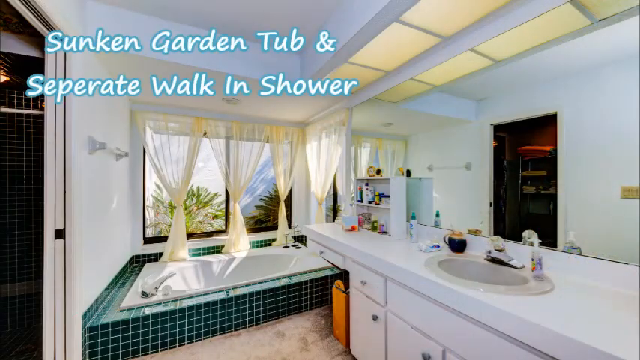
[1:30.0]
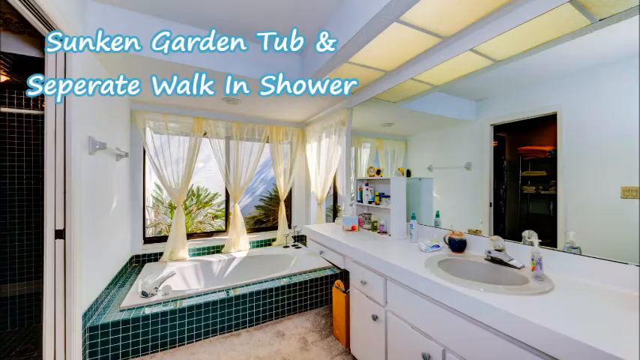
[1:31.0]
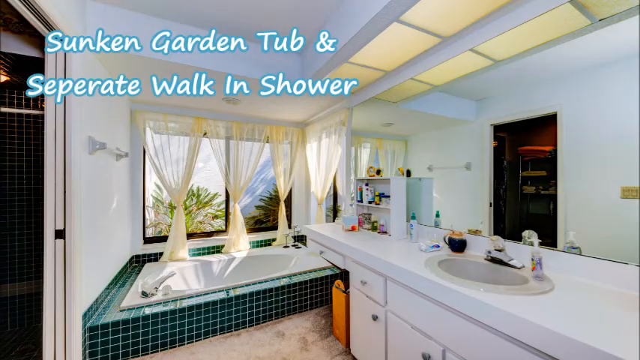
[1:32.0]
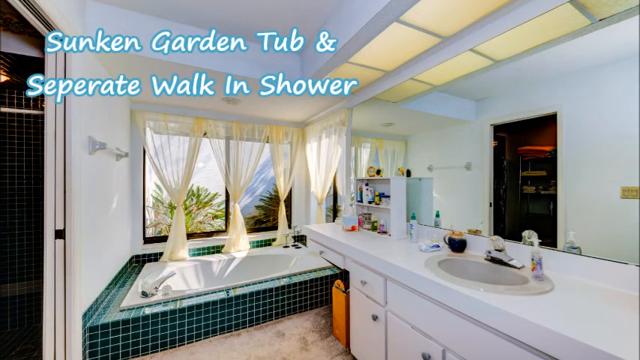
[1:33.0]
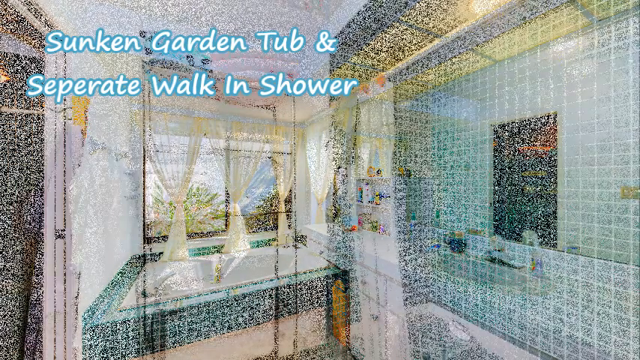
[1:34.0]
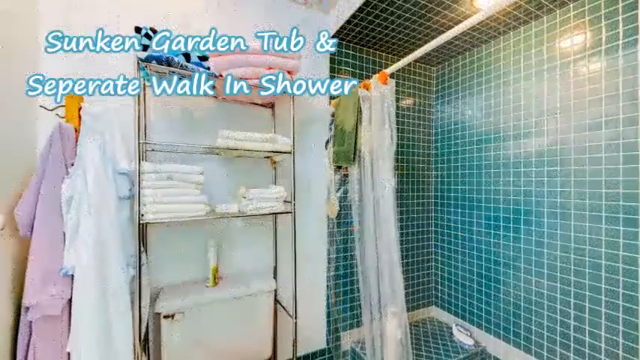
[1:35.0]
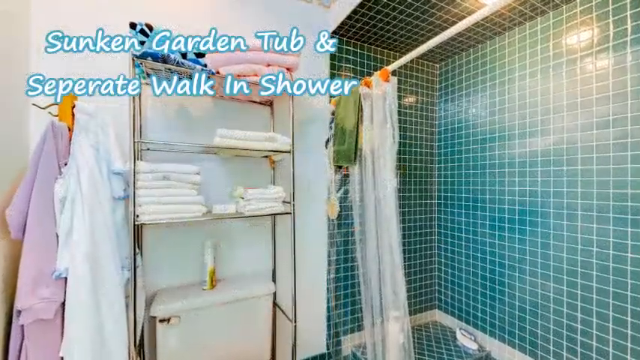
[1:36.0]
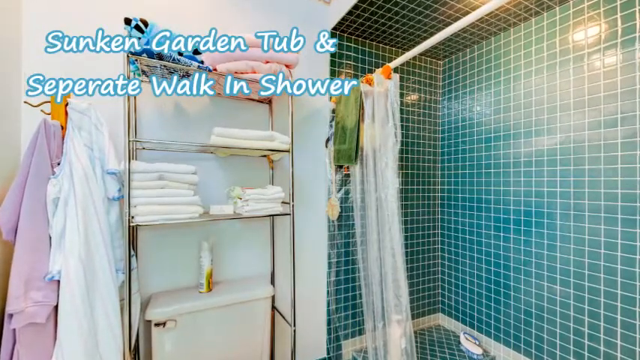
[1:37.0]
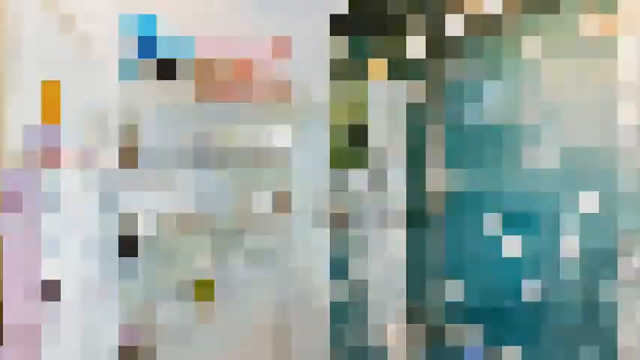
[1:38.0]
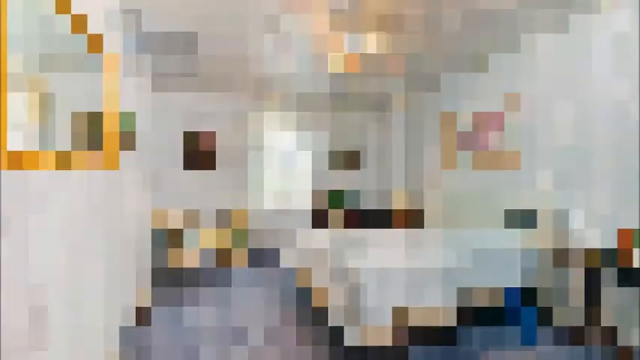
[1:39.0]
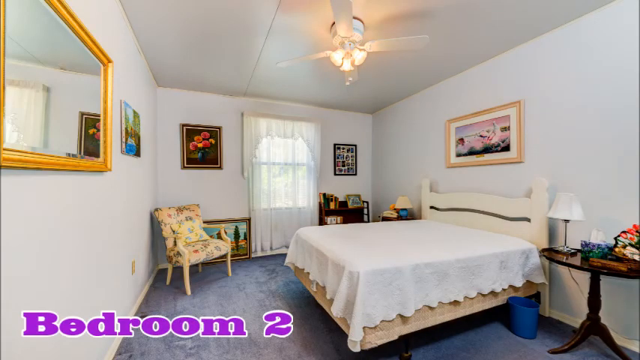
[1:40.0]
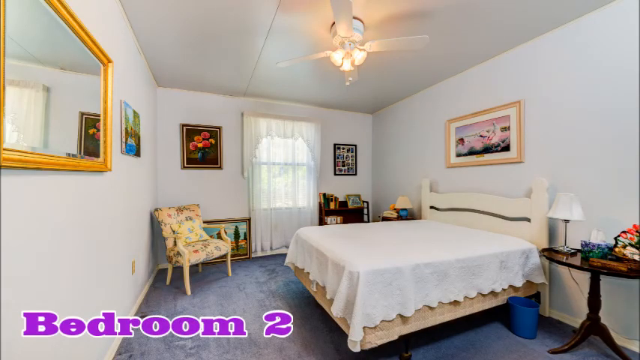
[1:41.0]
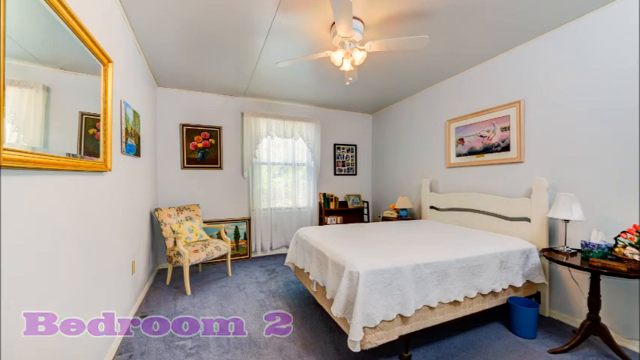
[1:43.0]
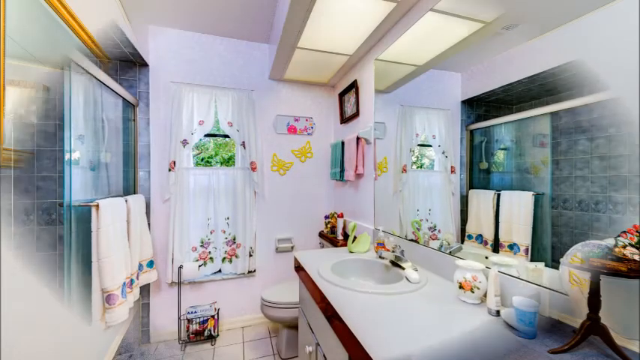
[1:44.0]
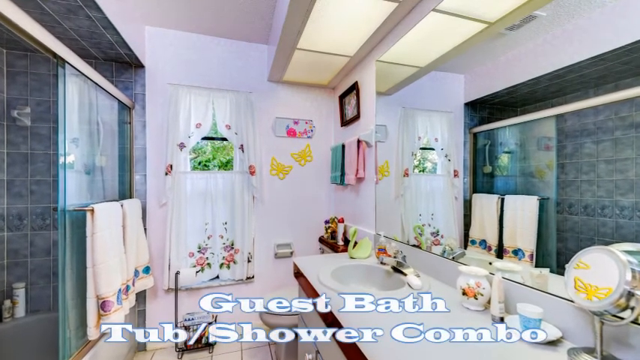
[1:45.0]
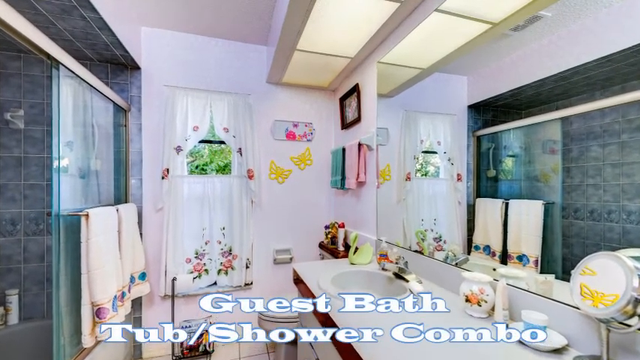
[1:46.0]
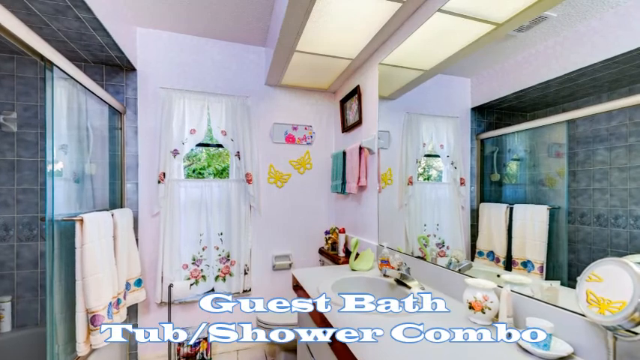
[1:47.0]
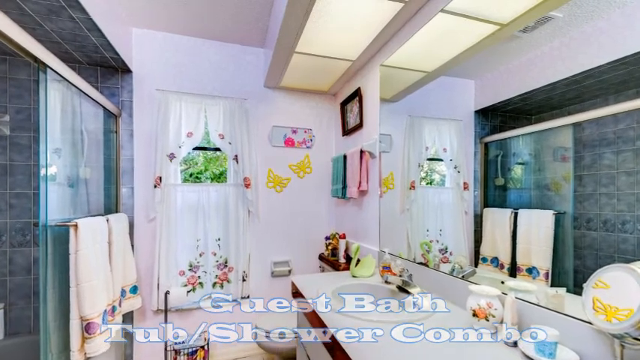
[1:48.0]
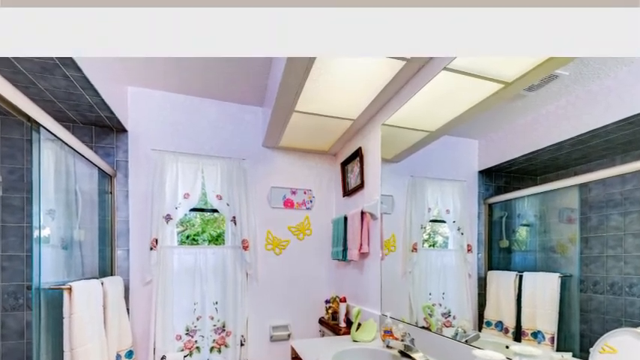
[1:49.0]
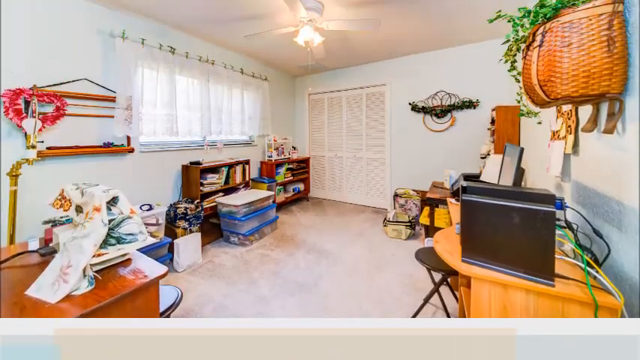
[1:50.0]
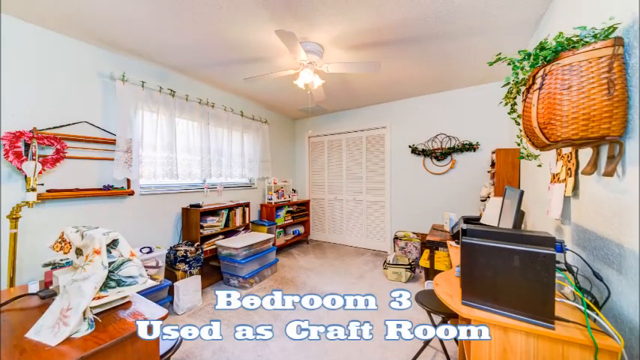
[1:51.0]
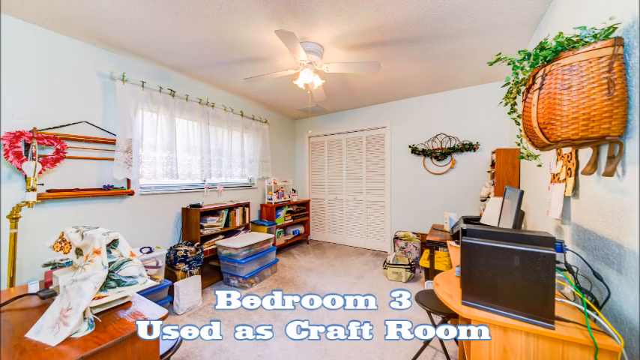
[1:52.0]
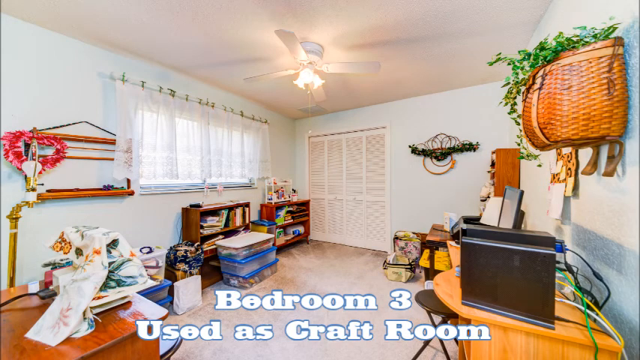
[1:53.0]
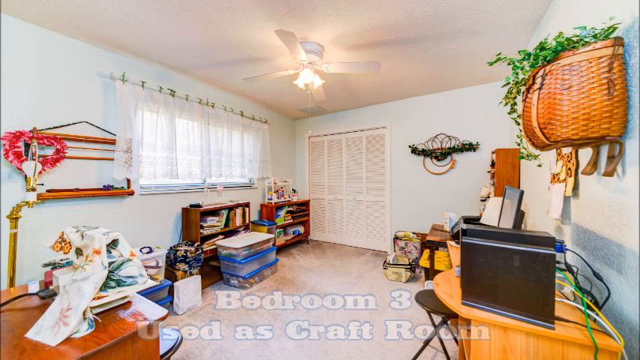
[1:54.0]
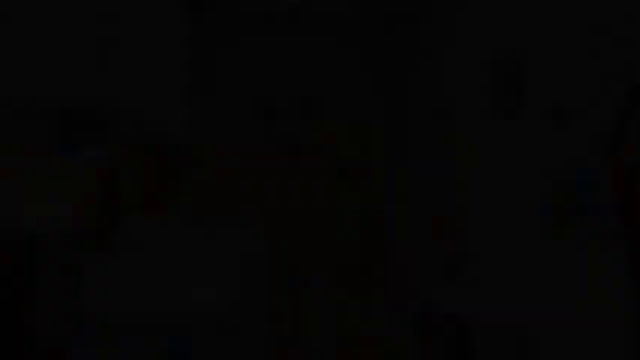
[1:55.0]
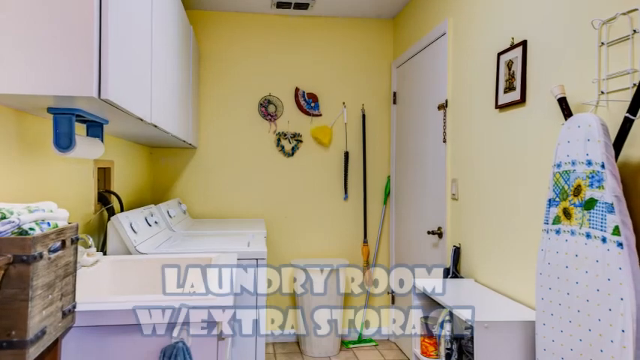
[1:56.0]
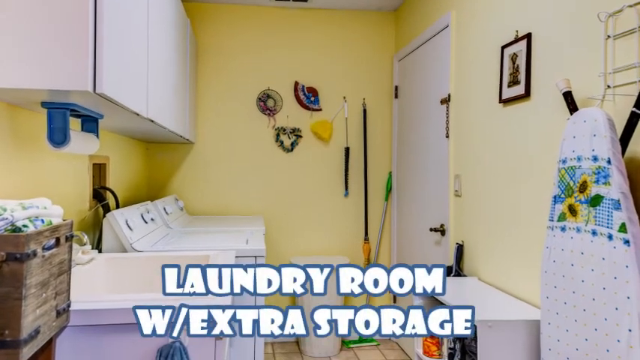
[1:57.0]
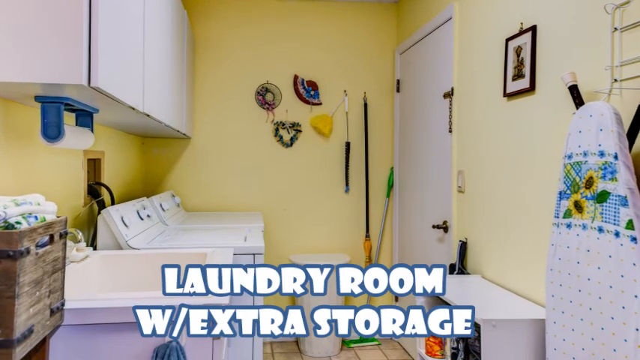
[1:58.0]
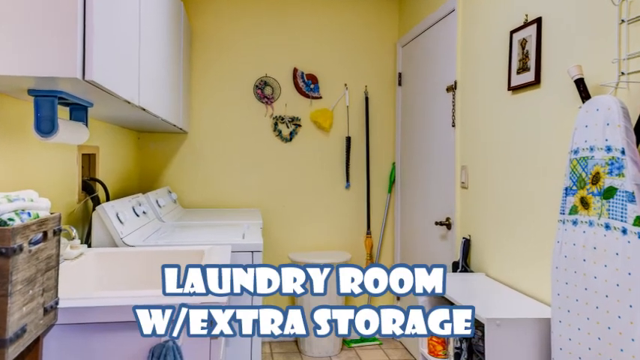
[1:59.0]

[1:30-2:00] The master bathroom shows the sunken garden tub, with text noting a separate walk-in shower. The video then looks at the shower area, which is also tiled in green. Some shelves on a stand are over the toilet, and some towels hang on the walls. The camera moves to bedroom two, which has white walls, a ceiling fan, a blue-colored carpet, some pictures and a mirror on the walls, and a small table on either side of the bed, each with a lamp and some other things on it. A guest bathroom has a shower-tub combo that appears to be either white or lavender. Bedroom three is currently used as a guest room; closet doors are visible, a wicker basket with plants coming out of it hangs on the wall, and some bins of craft supplies are on the floor. The video ends this section in the laundry room with extra storage: yellow walls, white cabinets on the walls above the washer and dryer, a laundry sink, an ironing board, and what appears to be a bin of towels.